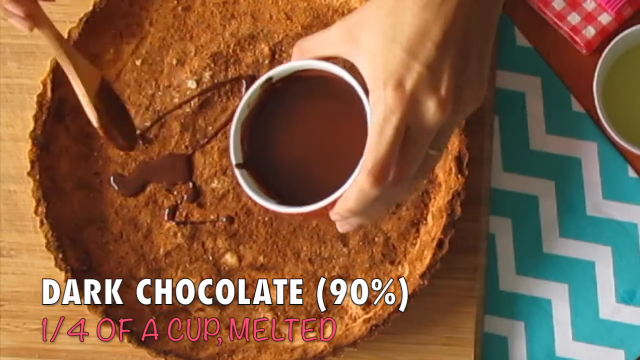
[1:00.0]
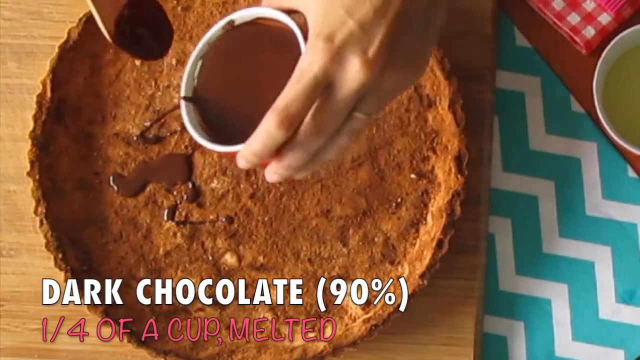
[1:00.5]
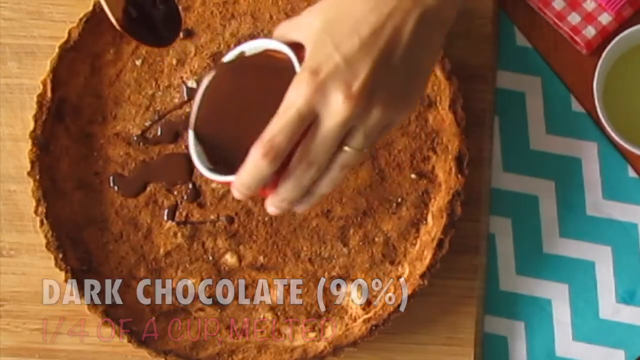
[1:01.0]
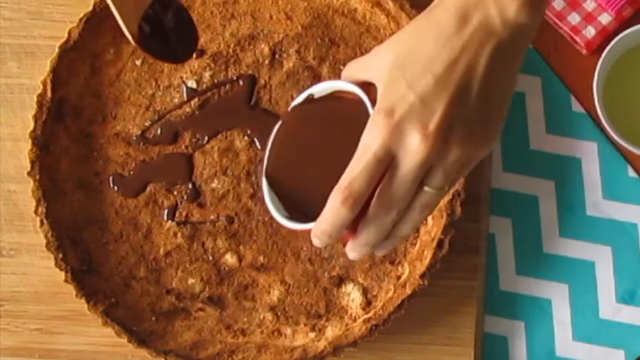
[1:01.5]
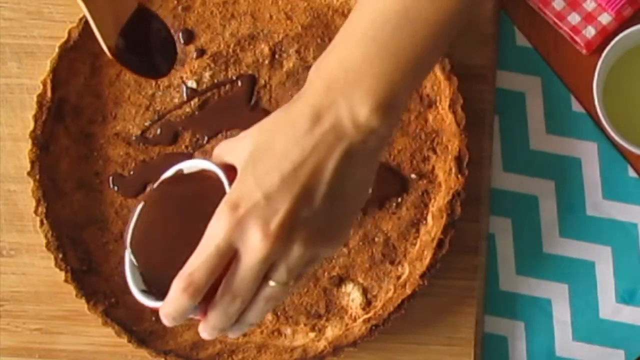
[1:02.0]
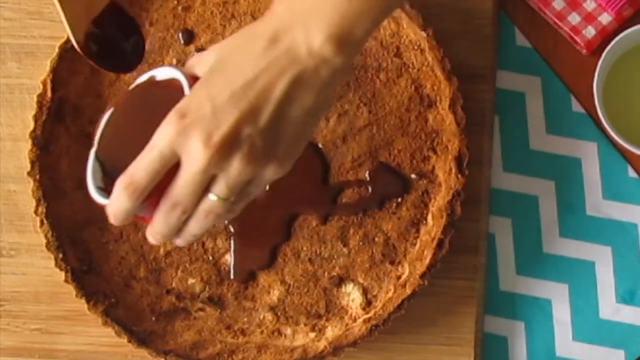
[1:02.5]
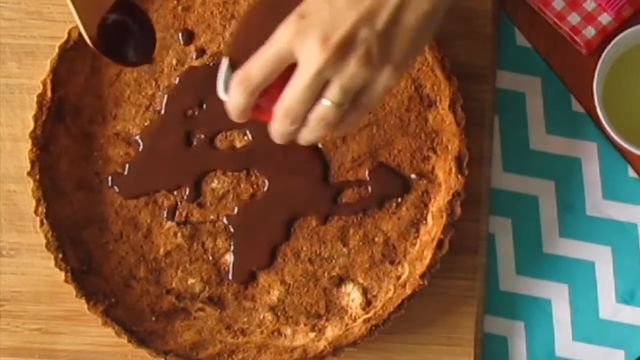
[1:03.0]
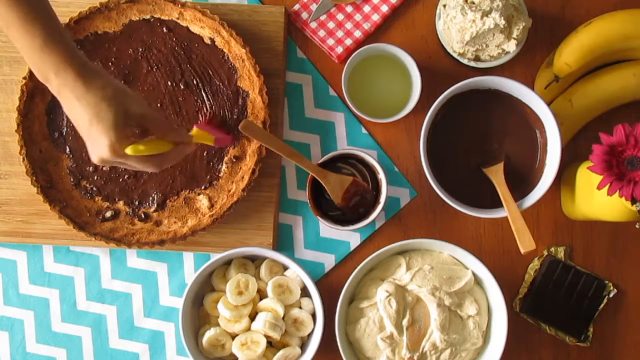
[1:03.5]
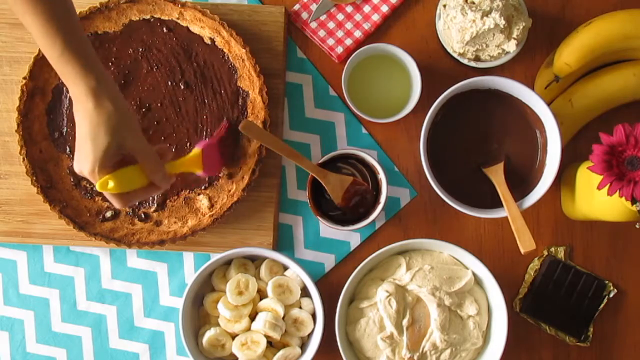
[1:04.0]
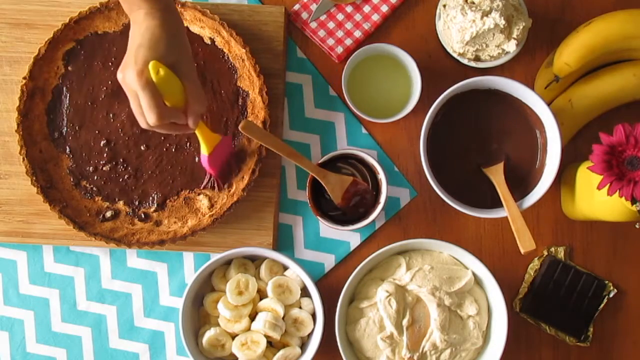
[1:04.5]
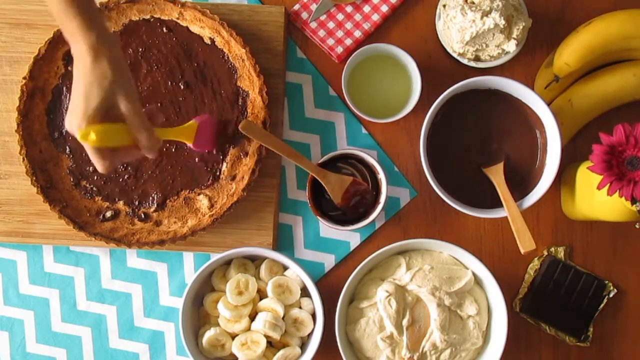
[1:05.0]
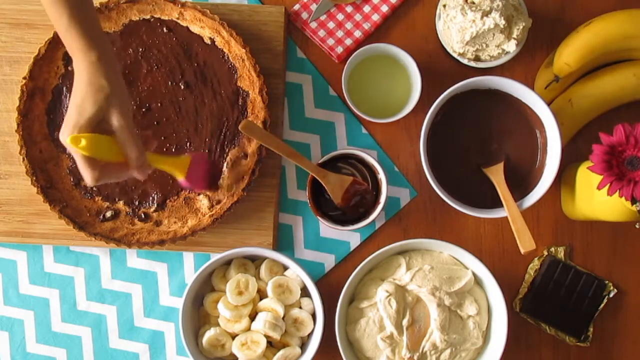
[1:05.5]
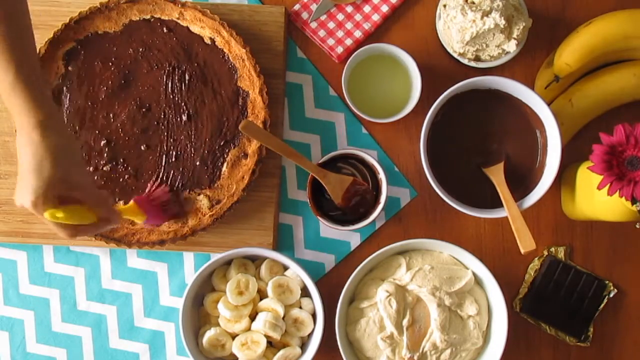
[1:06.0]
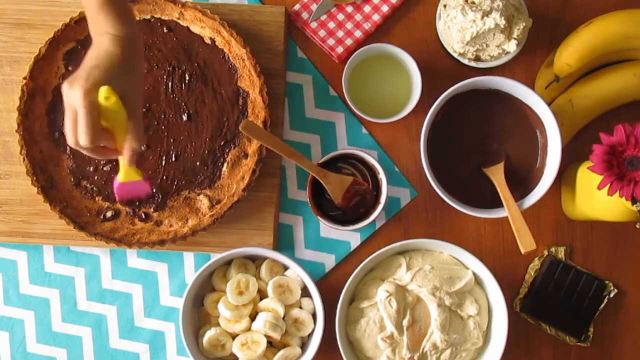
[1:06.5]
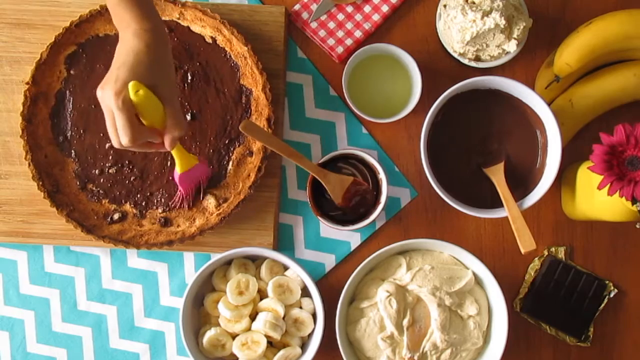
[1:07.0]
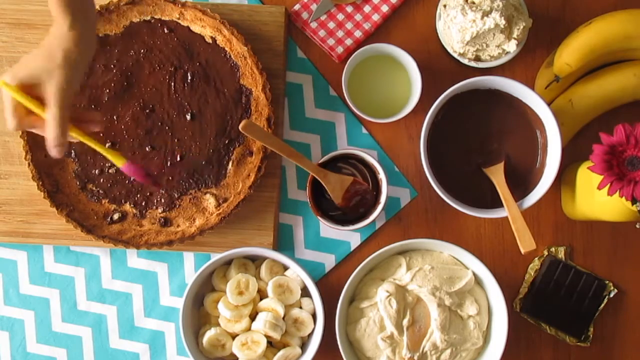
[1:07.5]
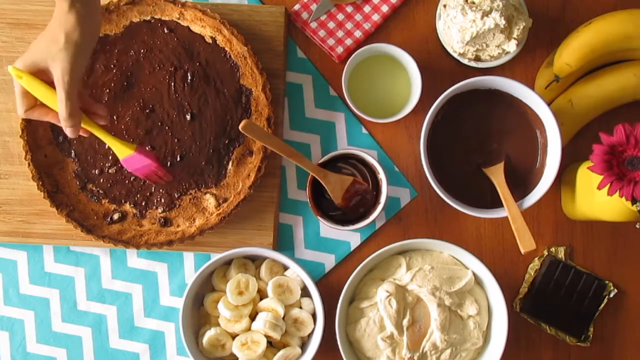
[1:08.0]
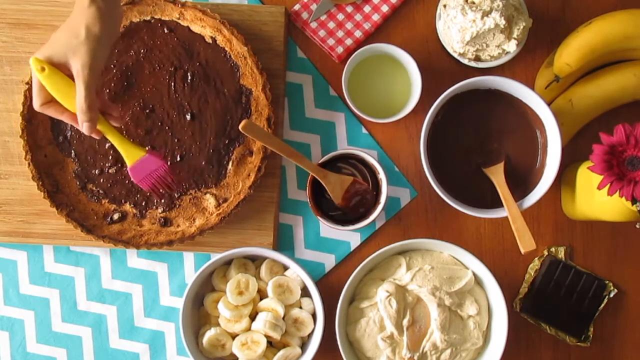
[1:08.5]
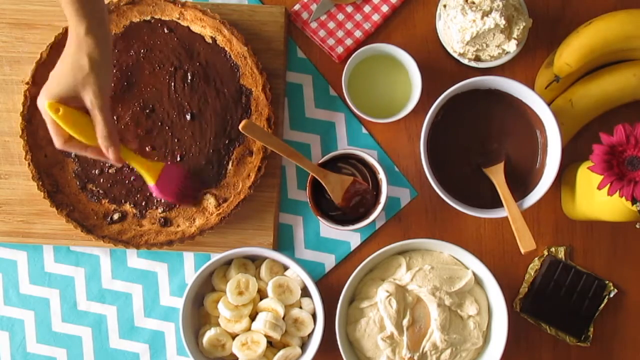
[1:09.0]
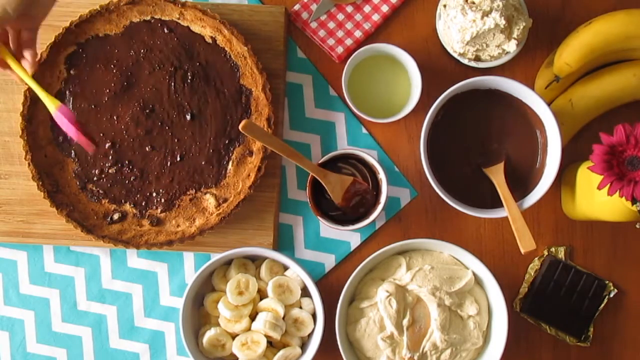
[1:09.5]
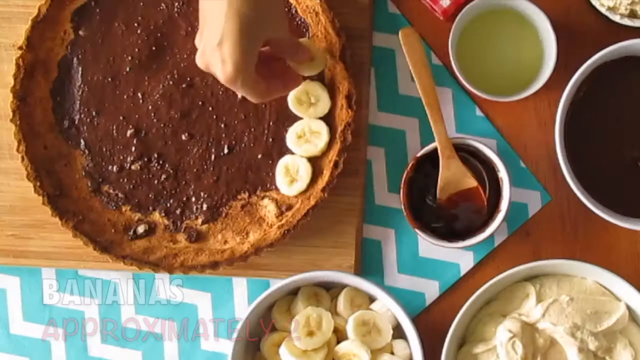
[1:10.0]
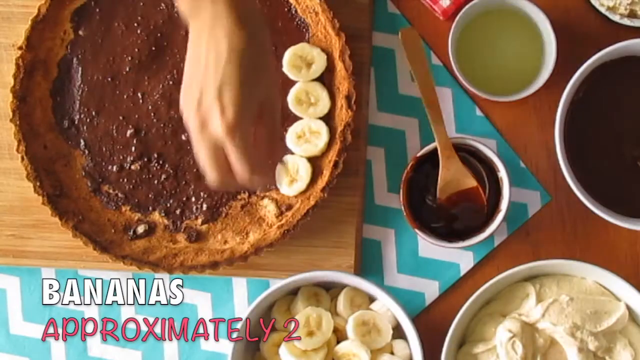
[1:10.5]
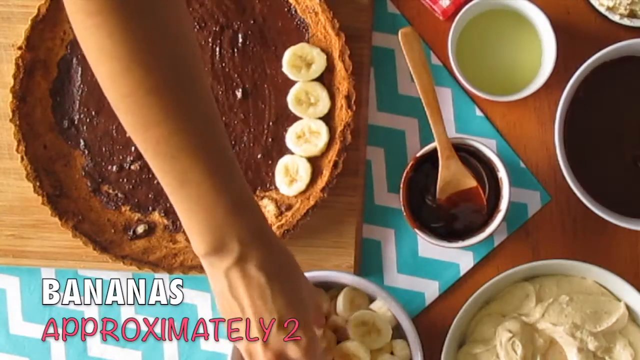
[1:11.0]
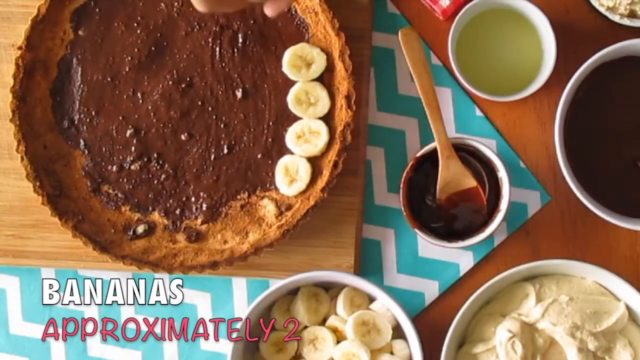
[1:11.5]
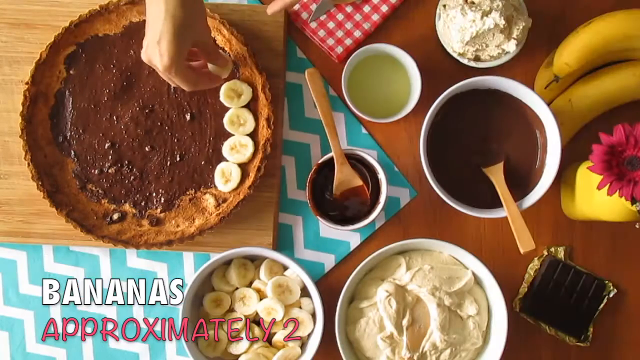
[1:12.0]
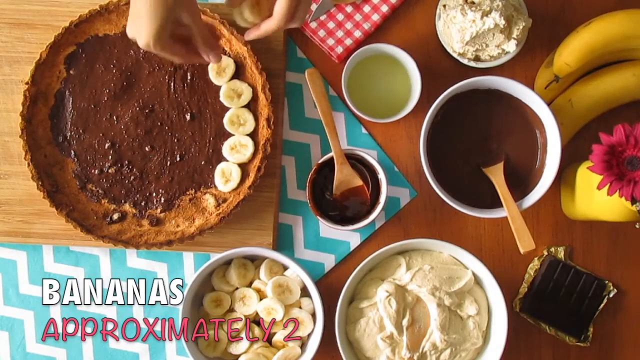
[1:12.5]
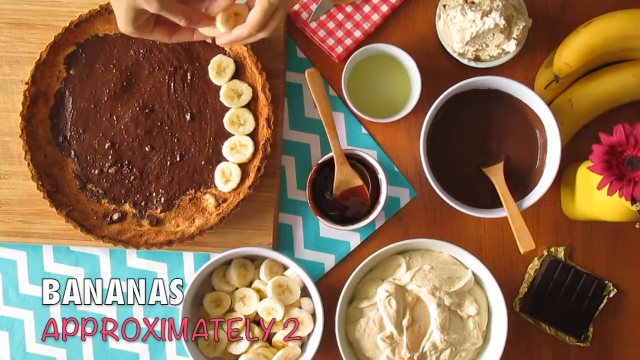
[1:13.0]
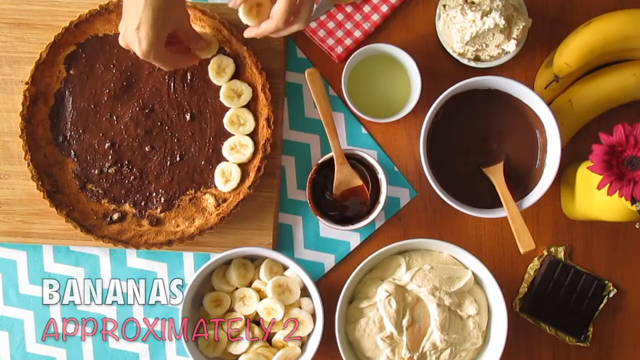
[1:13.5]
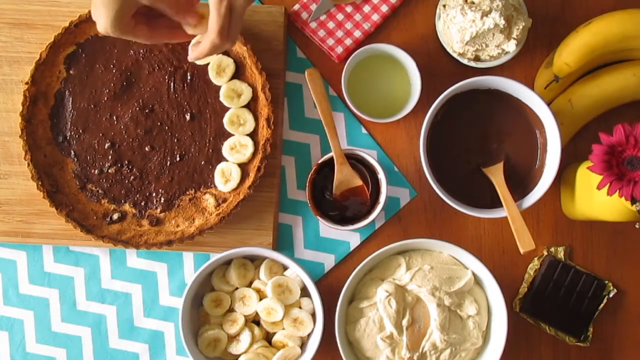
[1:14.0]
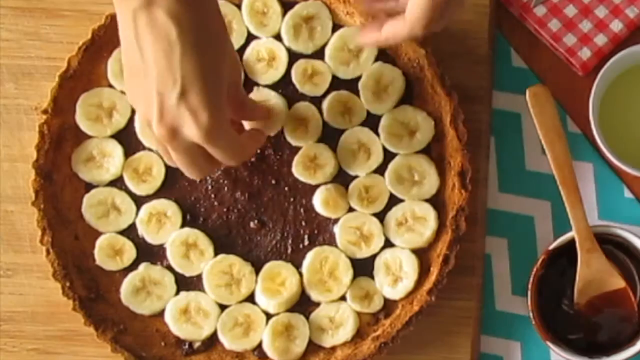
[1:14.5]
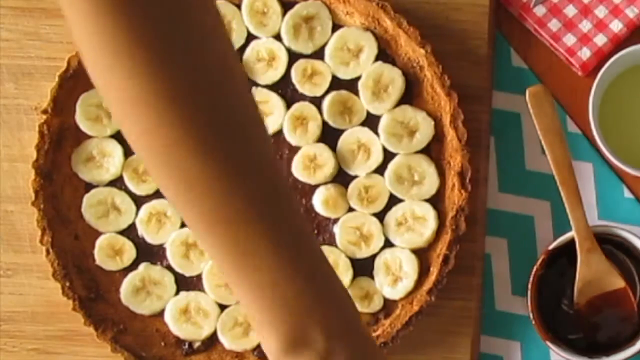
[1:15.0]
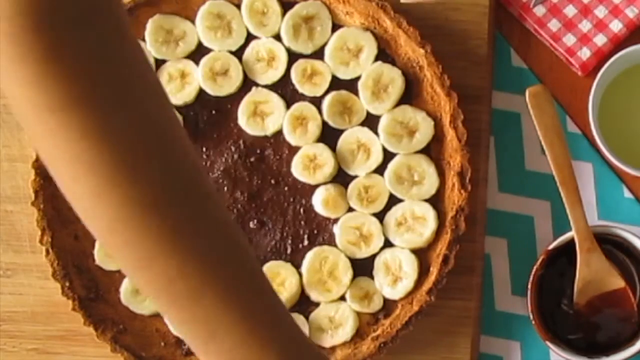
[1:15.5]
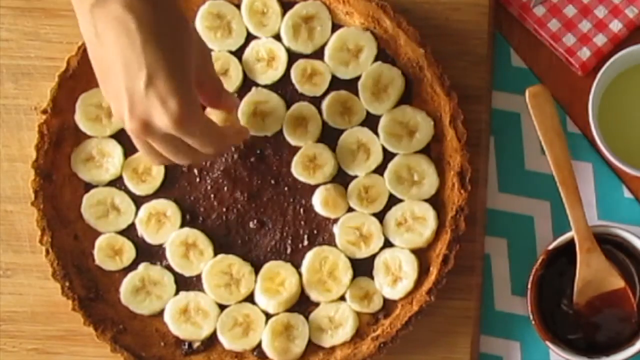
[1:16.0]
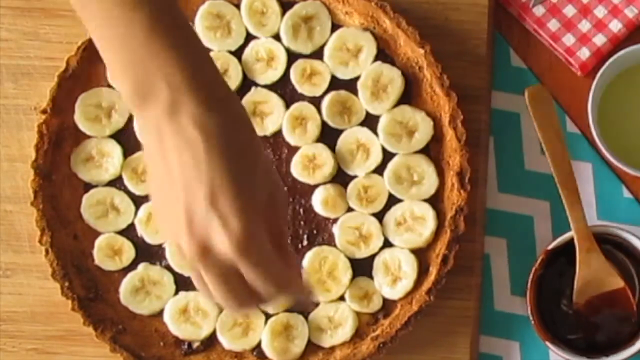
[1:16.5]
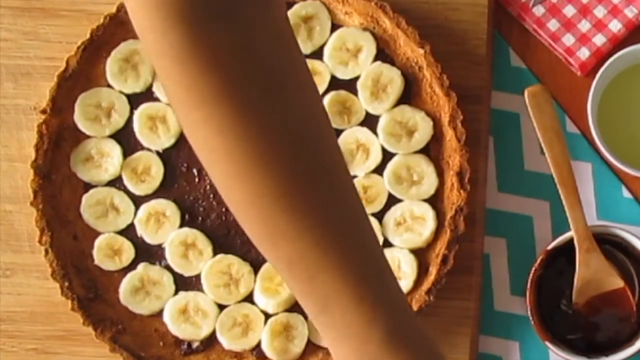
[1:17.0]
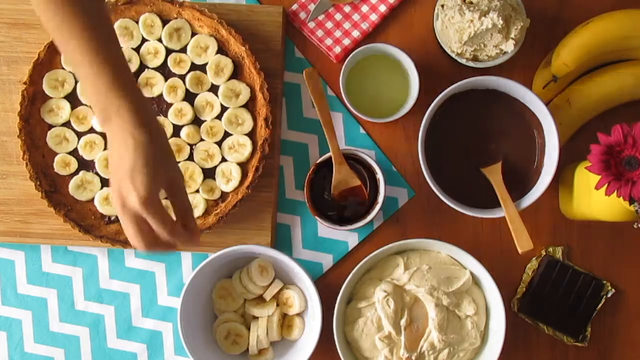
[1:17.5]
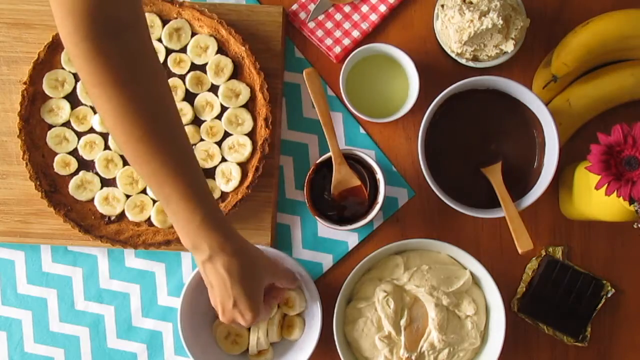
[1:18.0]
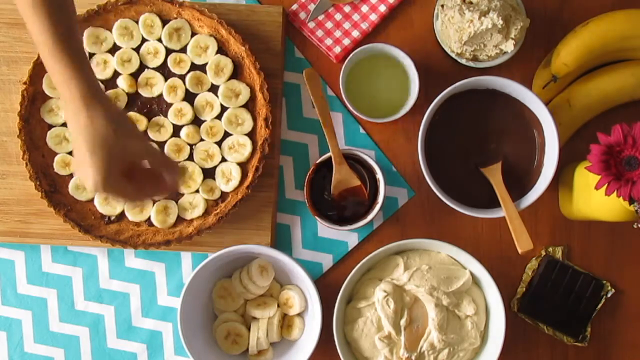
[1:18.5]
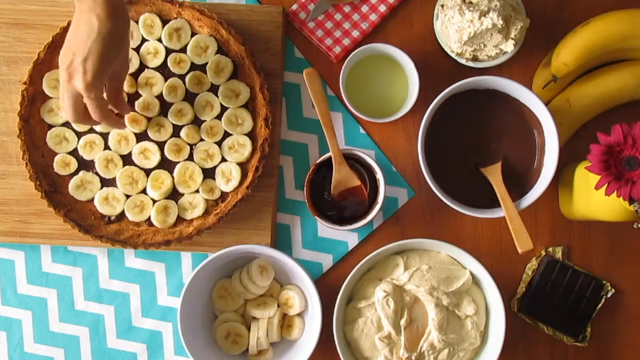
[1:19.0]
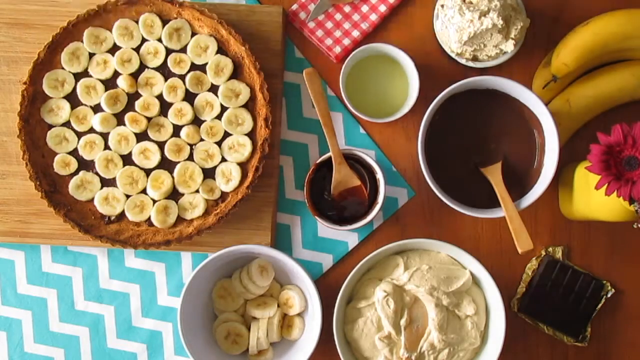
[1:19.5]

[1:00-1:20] The base of the pie is shown with someone's hands: the left hand holds a pot of melted 90% dark chocolate while the other hand empties the chocolate into the base, pouring it in. A small plastic yellow and pink brush is then used to brush the chocolate into all areas of the base. Next, cut bananas are layered side by side in the bottom of the pie on top of the melted chocolate. White on-screen text reads "bananas" and pink text underneath reads "approximately two". The hand fills the bottom of the pie with banana slices until there are no gaps. The other ingredients are on the table in the background: a bowl of cream, some full bananas, a pink gerbera flower, some solid chocolate, some melted chocolate and more banana slices.